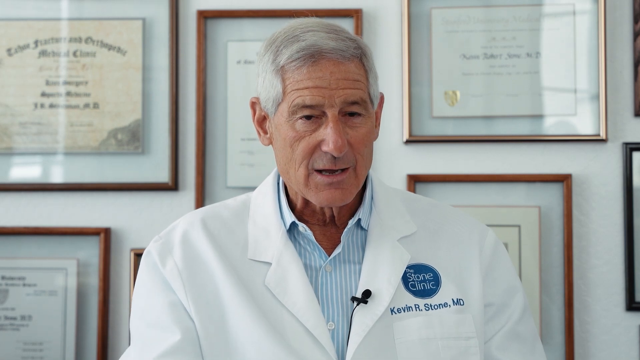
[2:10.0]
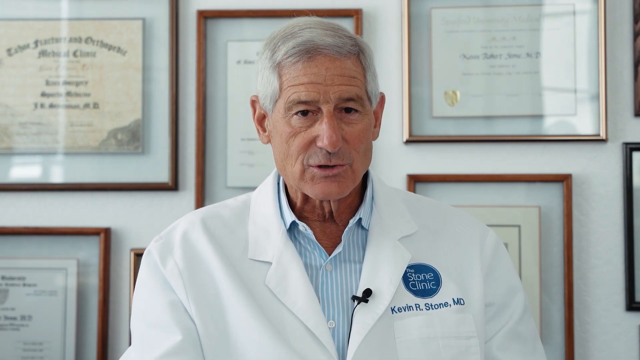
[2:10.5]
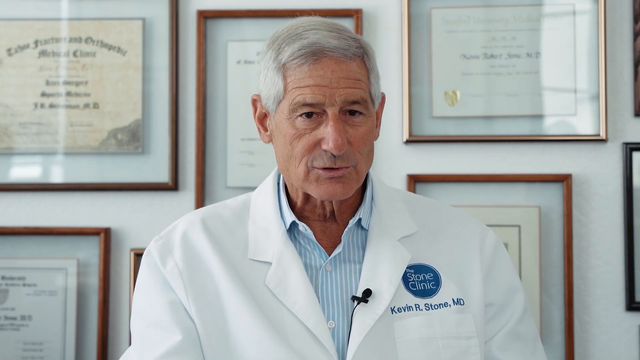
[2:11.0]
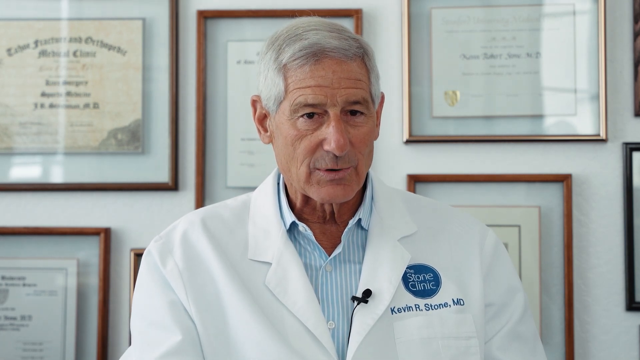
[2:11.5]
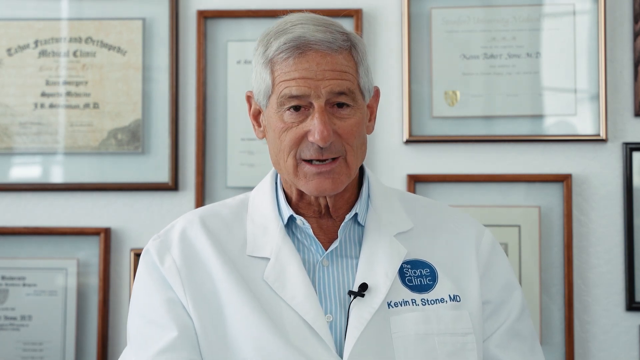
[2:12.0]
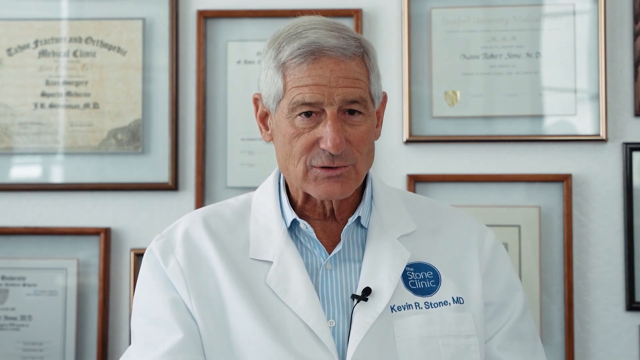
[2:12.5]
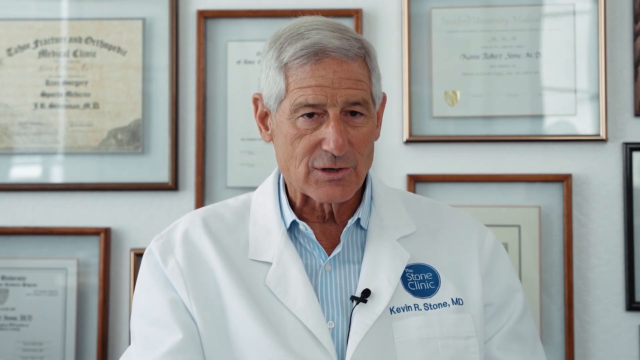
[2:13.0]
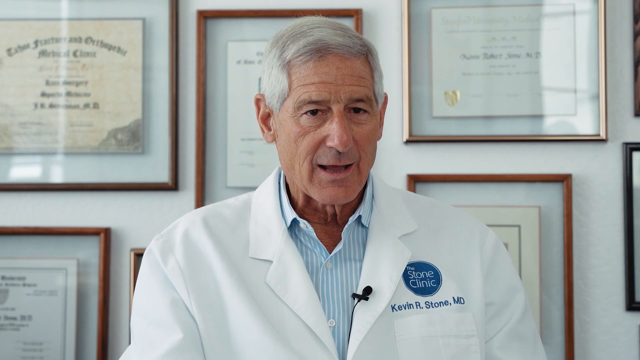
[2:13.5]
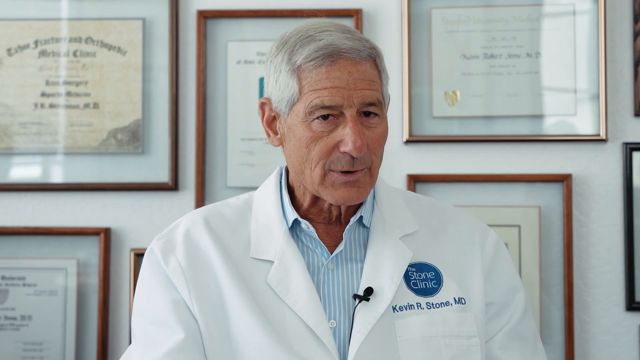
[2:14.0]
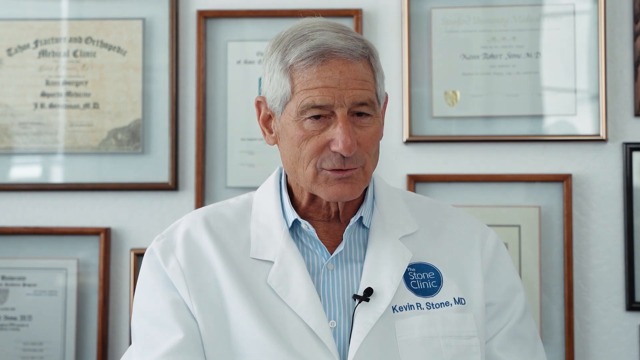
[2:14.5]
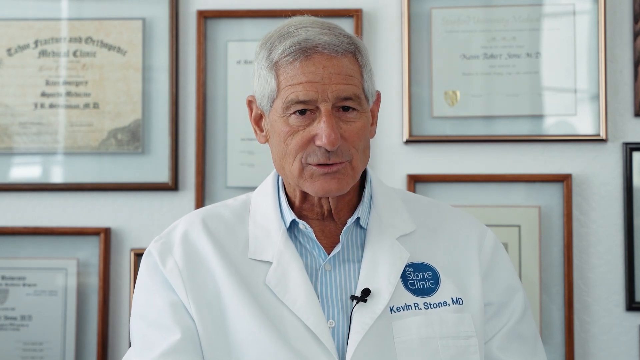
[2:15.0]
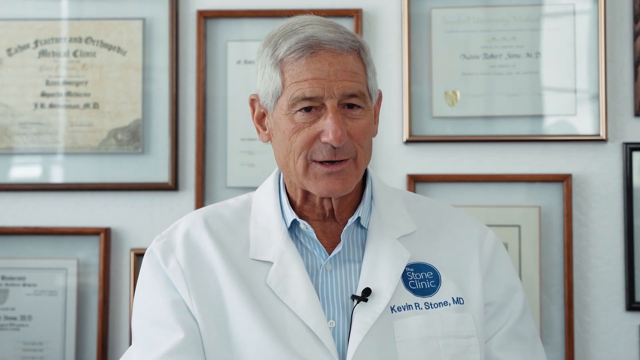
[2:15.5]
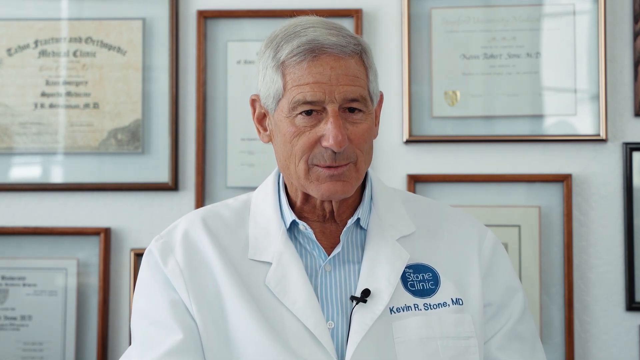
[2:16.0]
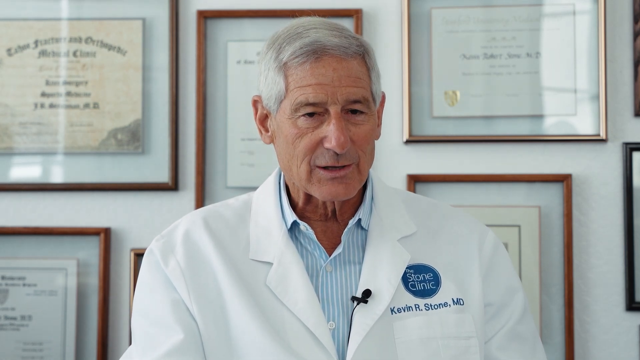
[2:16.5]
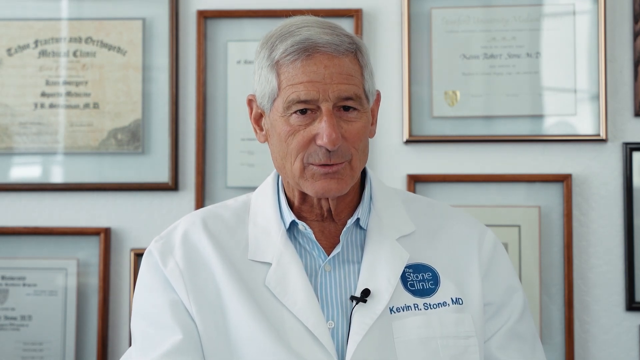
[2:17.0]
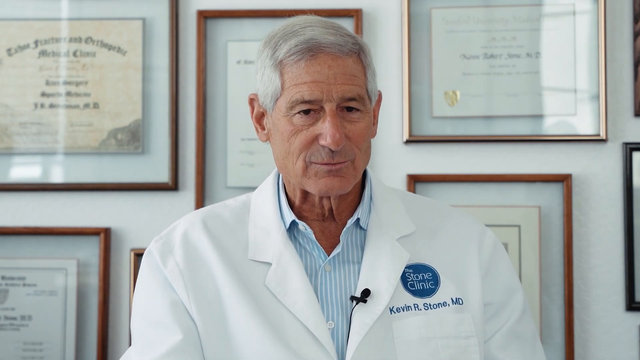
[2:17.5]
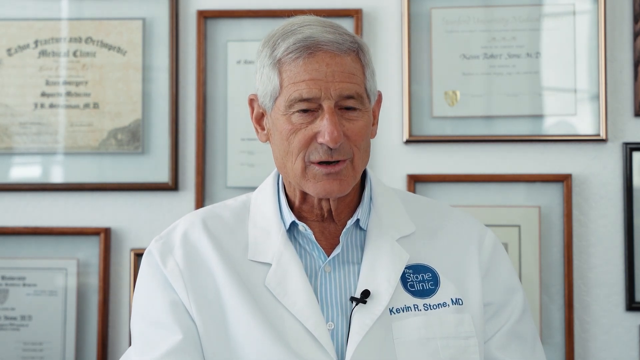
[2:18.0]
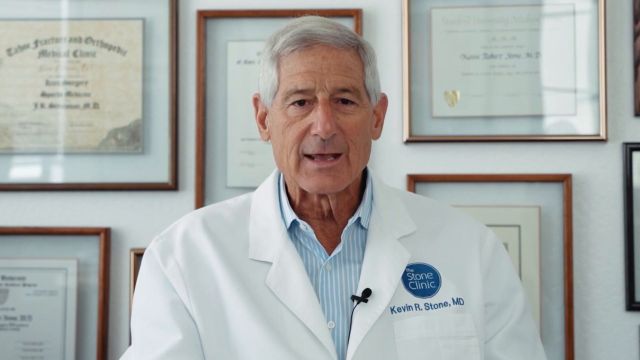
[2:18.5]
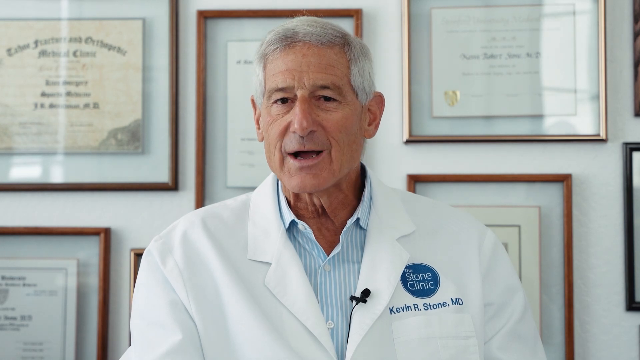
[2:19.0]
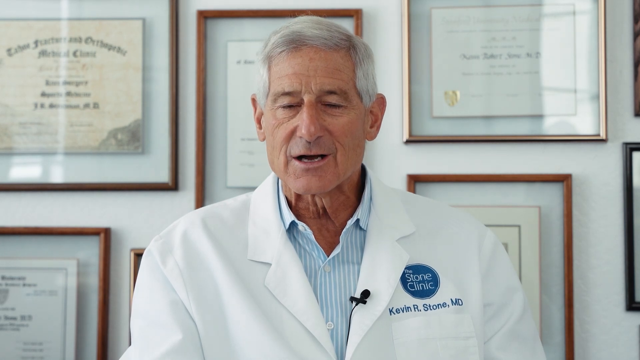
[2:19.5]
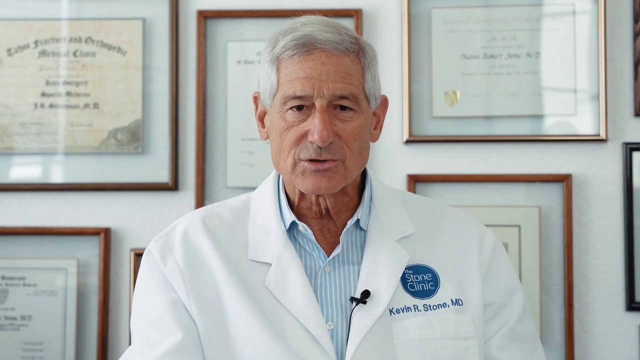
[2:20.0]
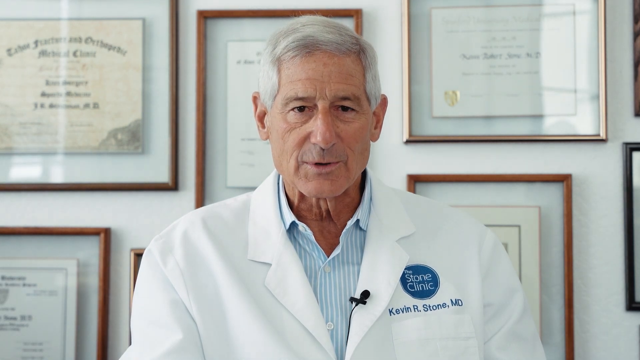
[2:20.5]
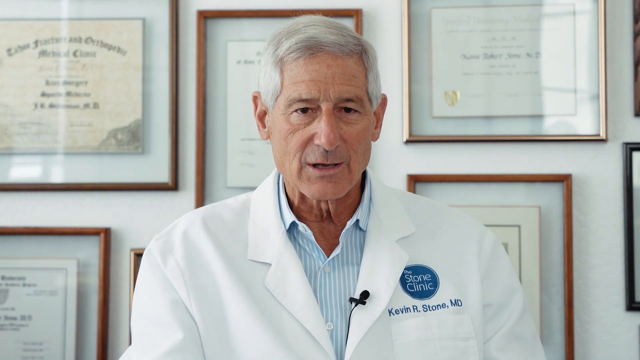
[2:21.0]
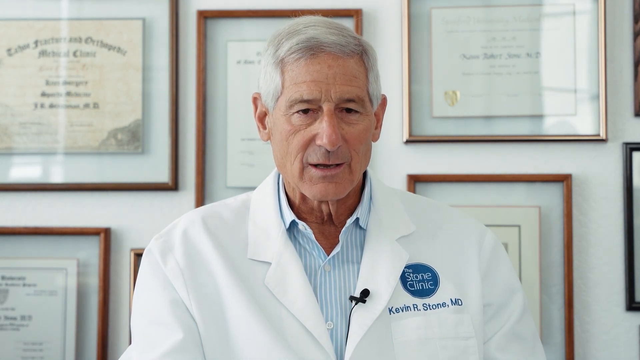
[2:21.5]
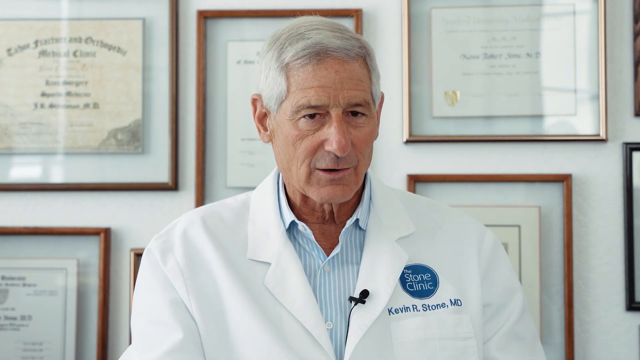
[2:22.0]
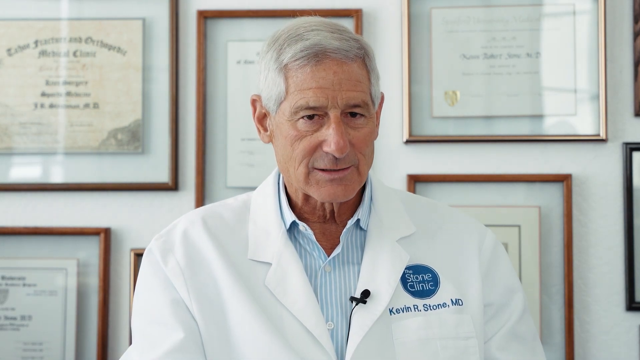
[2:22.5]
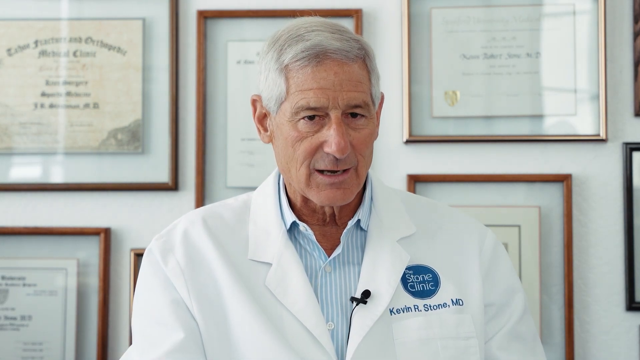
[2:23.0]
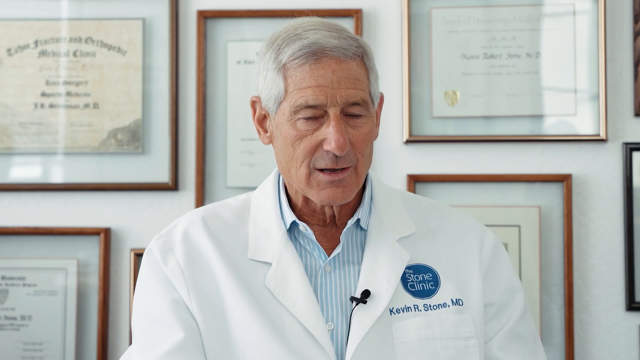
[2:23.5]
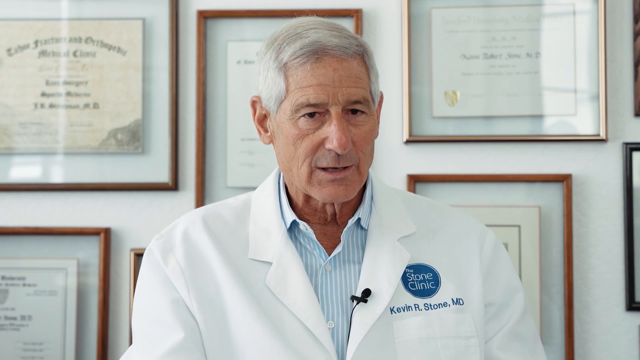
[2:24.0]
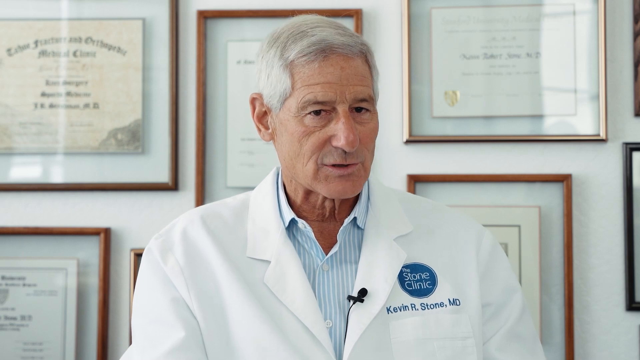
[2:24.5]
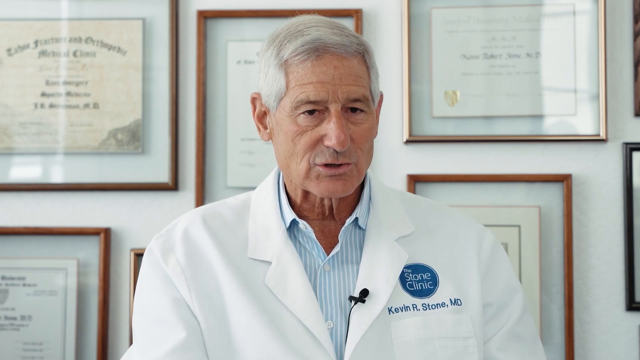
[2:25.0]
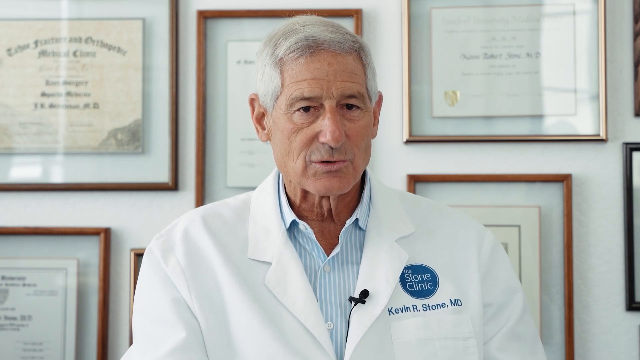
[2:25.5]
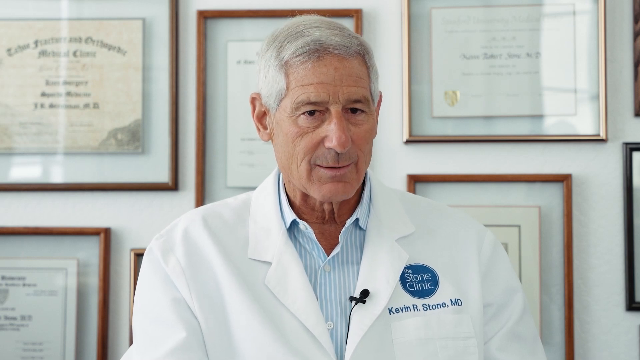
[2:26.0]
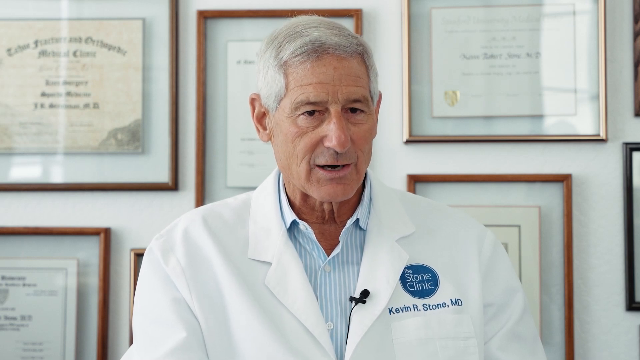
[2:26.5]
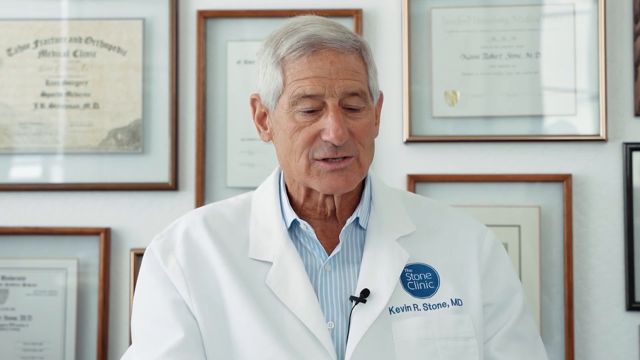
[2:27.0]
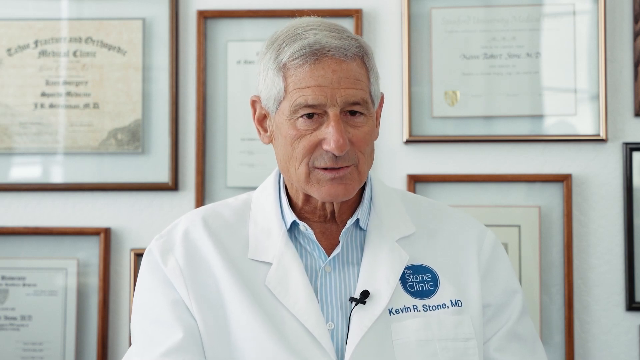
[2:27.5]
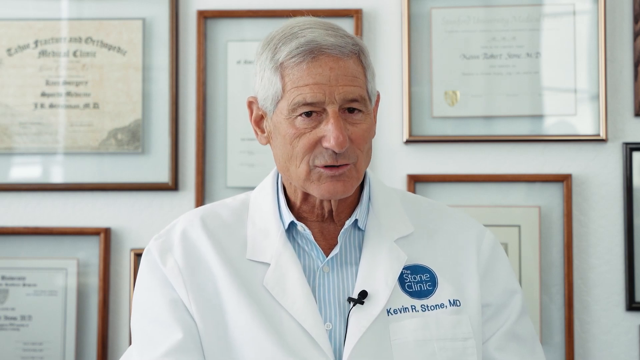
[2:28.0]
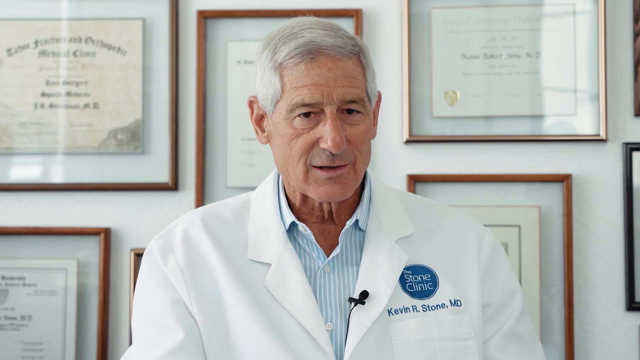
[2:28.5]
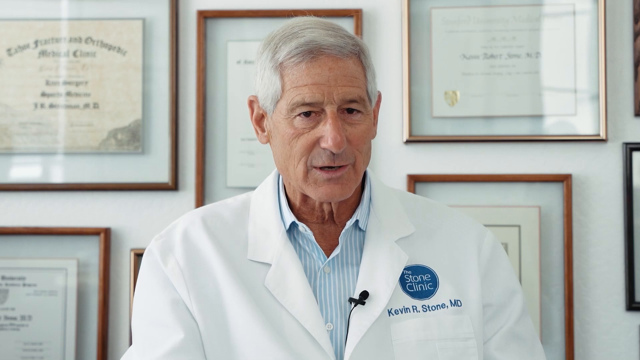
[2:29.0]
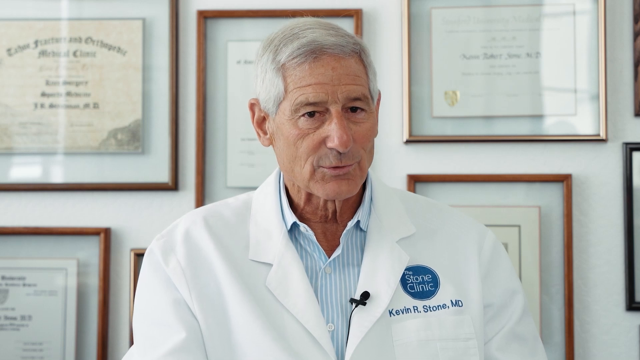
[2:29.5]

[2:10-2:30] Dr. Kevin Stone is interviewed, speaking to somebody while facing the camera. He is an elderly man with gray hair, clean shaven, wearing a white lab coat that shows the name of the clinic and his name. A lapel microphone is attached to the collar of his lab coat, and he wears a light blue and white vertically striped button-down collared shirt. Behind him, his diplomas and certificates are in glass frames on the wall.